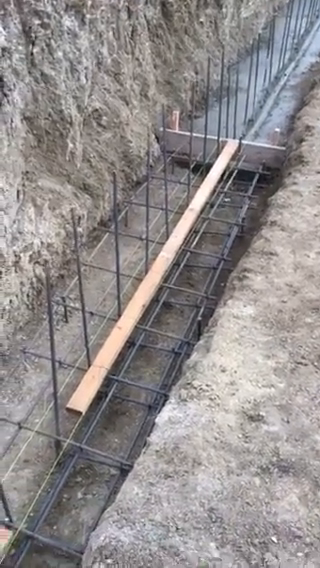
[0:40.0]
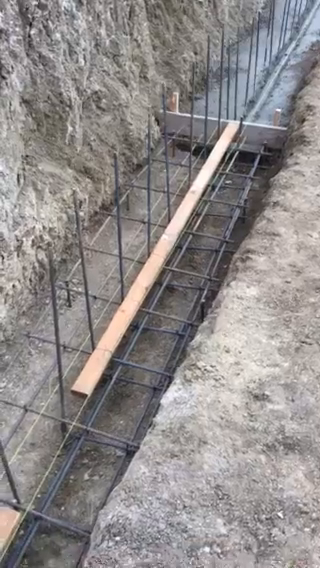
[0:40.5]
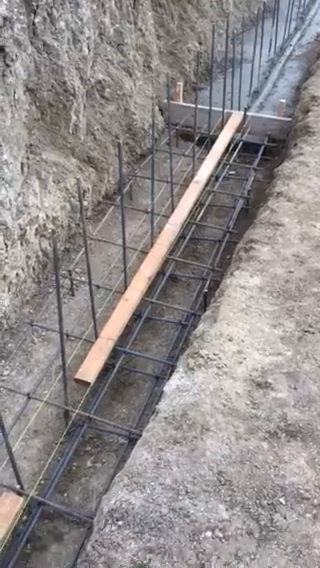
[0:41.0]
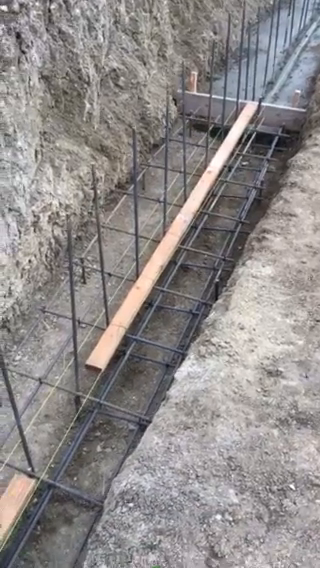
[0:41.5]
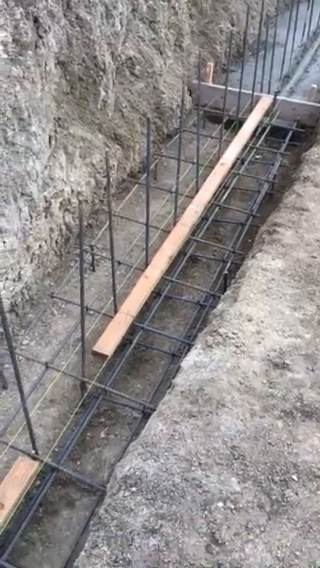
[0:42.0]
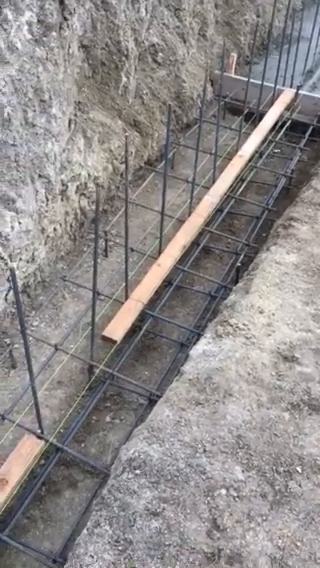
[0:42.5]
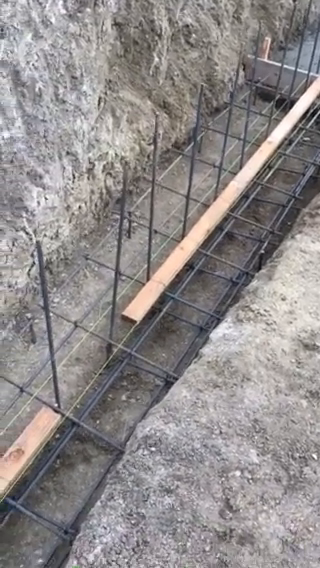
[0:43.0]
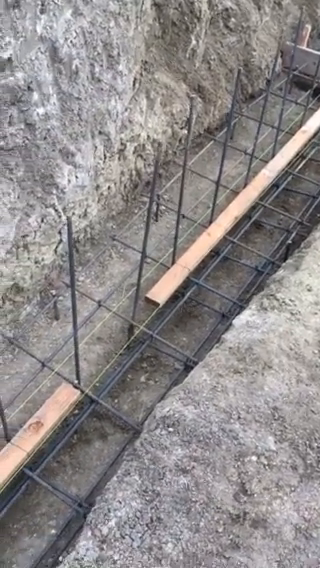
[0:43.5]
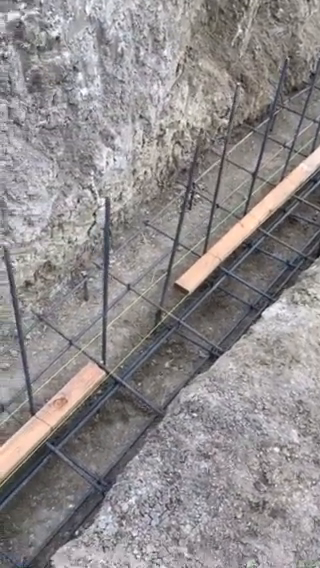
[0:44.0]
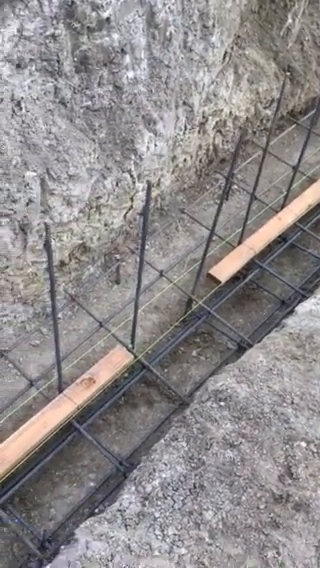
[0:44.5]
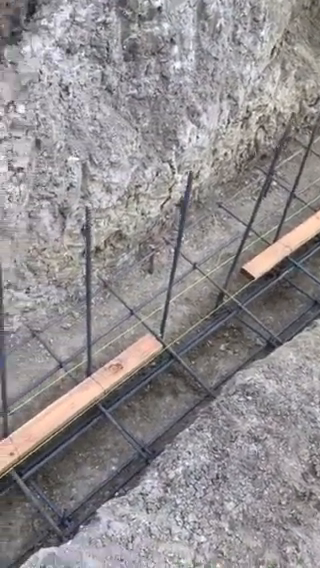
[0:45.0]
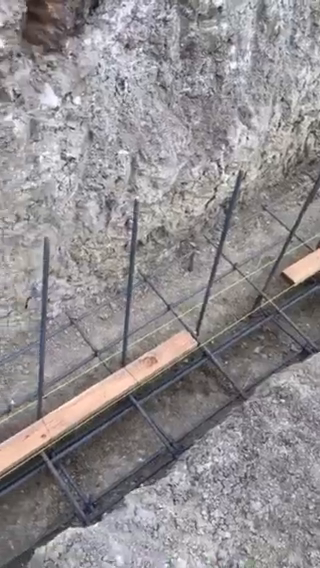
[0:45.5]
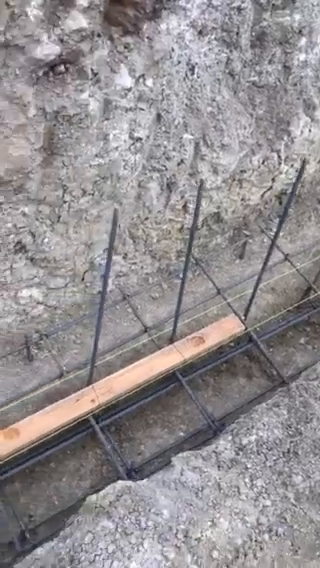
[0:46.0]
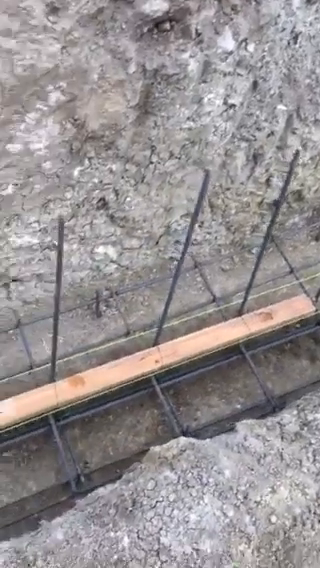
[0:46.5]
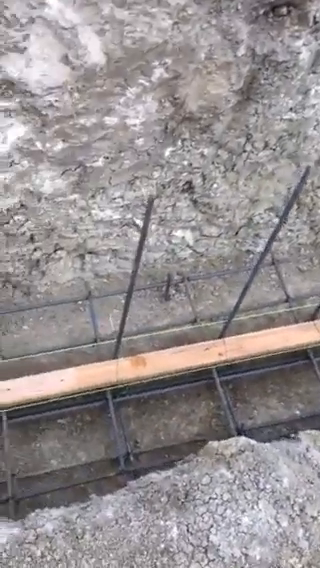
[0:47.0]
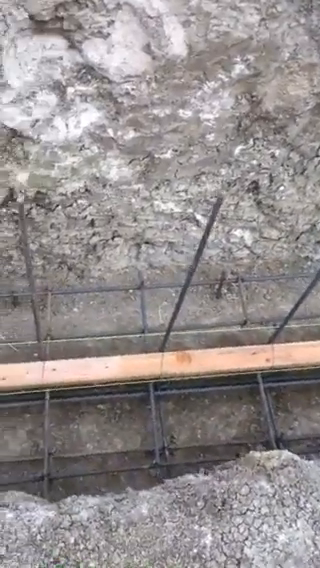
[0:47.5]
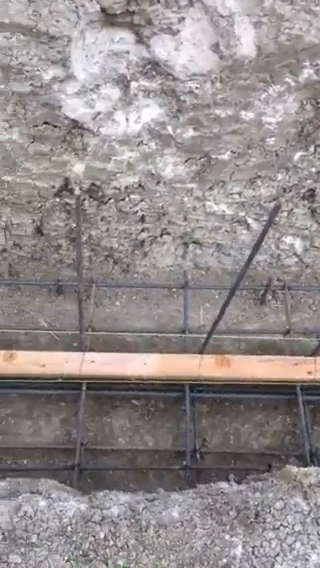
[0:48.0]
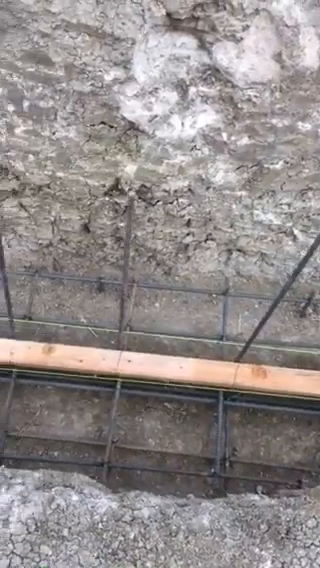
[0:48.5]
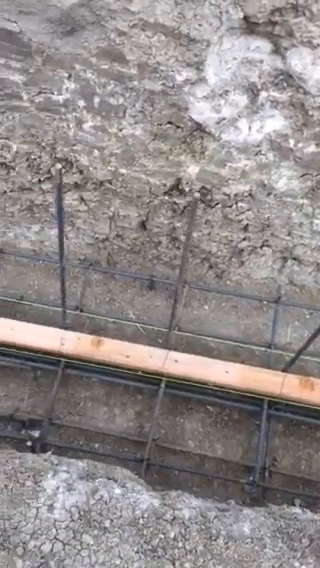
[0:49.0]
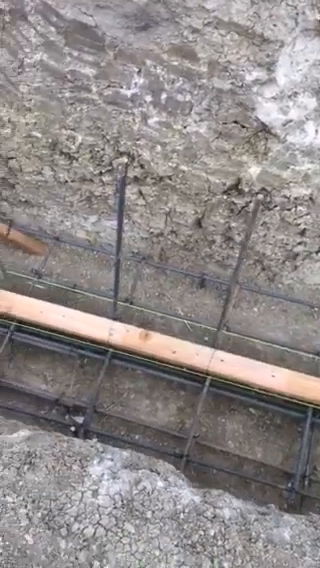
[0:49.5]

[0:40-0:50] The camera keeps focusing closely into the deep excavated furrow, moving from the edges. The wood is still supported by the metal plates. The furrow looks to have been dug into very strong rock, as the place is very rocky, and it has been dug very deep. Metal plates have been erected, standing like poles. The camera slowly moves from right to left, capturing a close-up of the furrow and the mountain walls; the furrow has the mountain as its walls surrounding it. The man taking the picture looks to be standing in front and a little up the edges of the furrow.